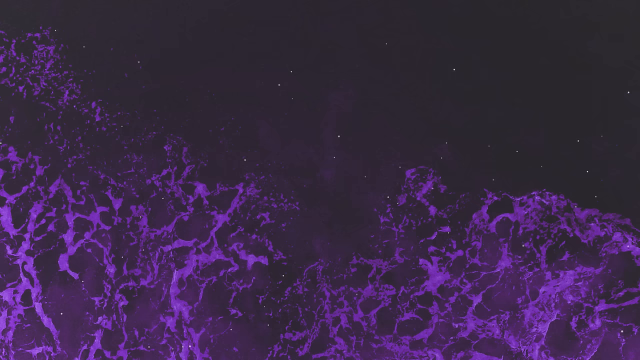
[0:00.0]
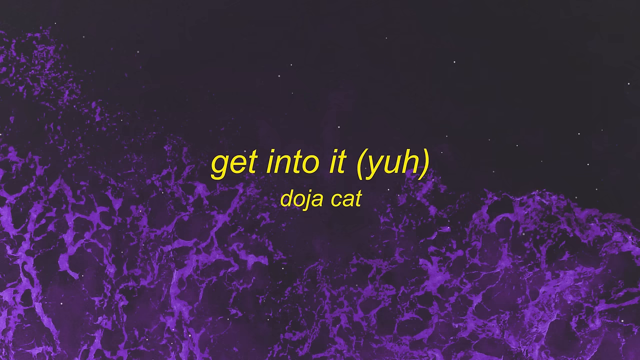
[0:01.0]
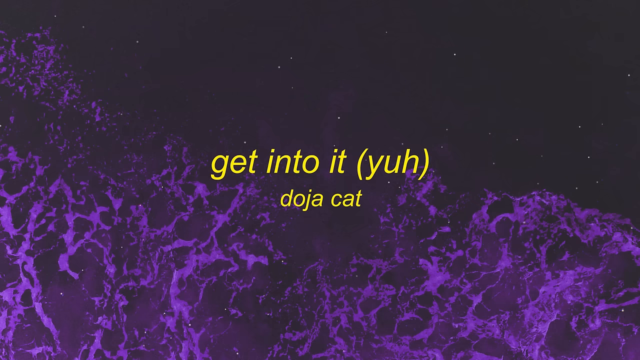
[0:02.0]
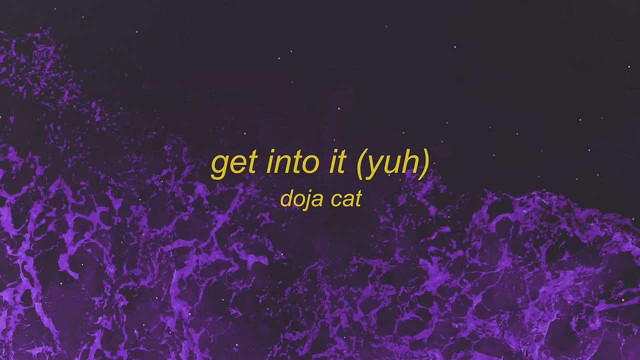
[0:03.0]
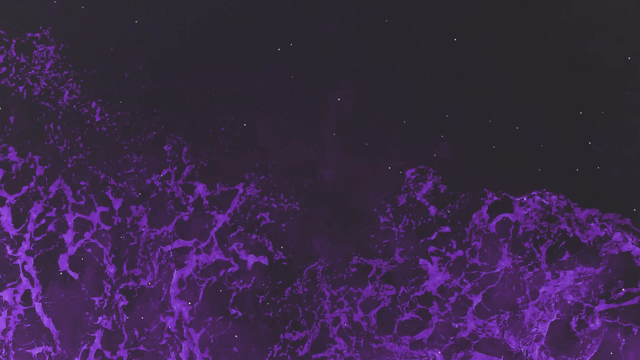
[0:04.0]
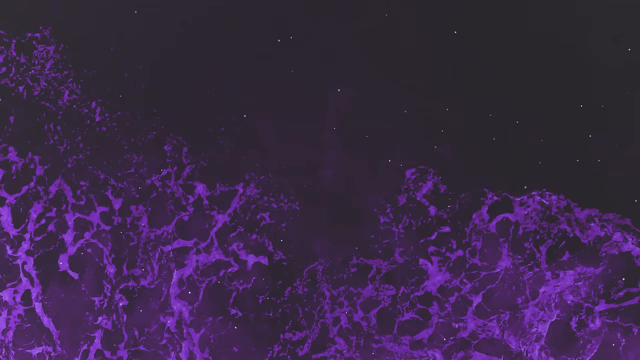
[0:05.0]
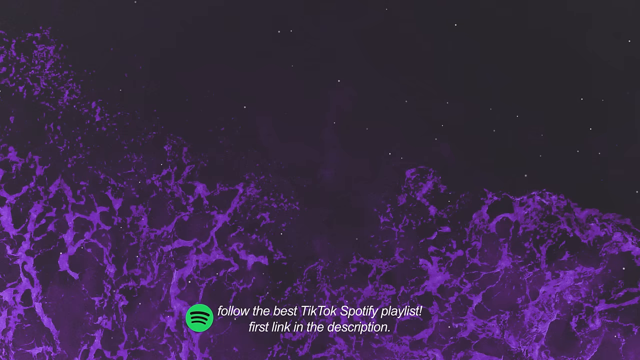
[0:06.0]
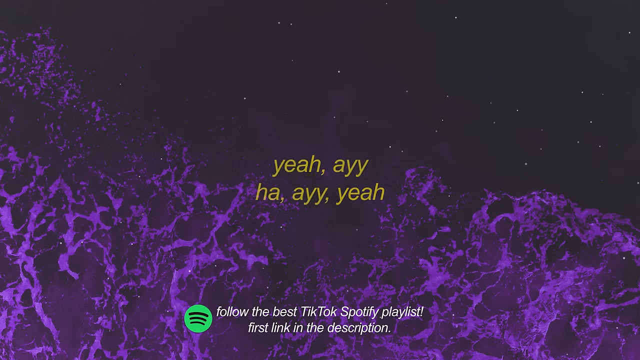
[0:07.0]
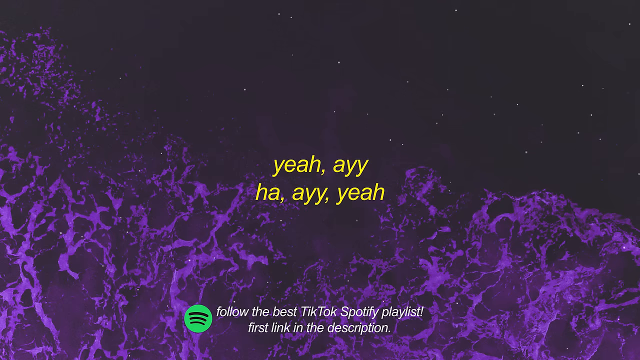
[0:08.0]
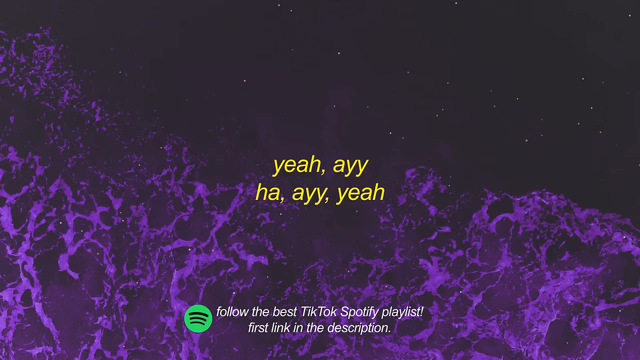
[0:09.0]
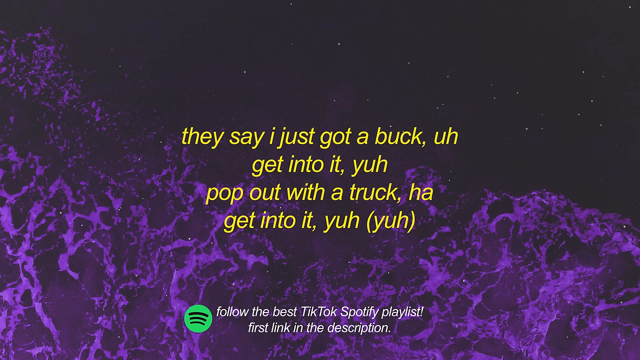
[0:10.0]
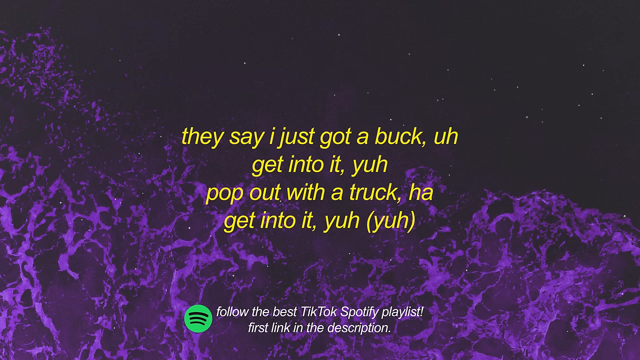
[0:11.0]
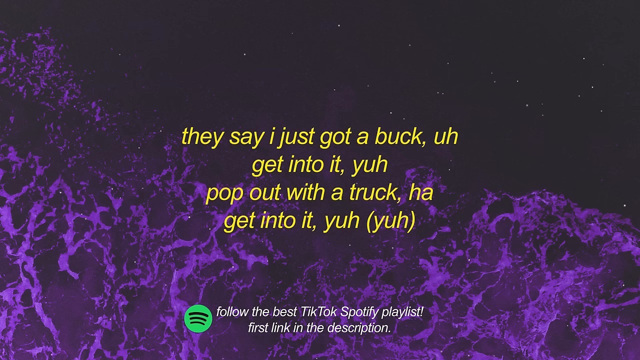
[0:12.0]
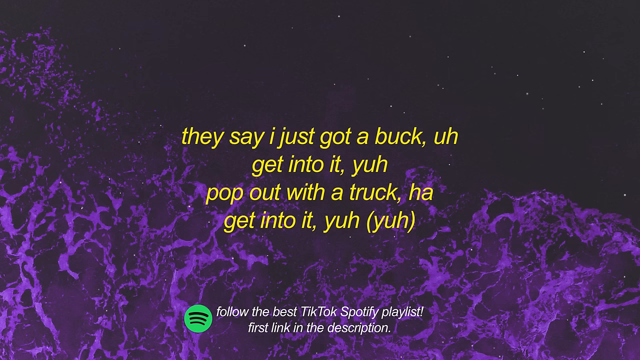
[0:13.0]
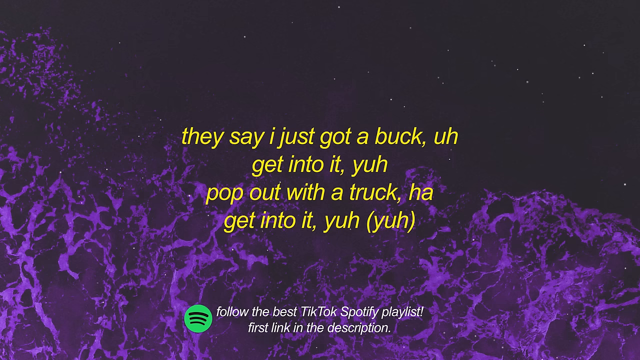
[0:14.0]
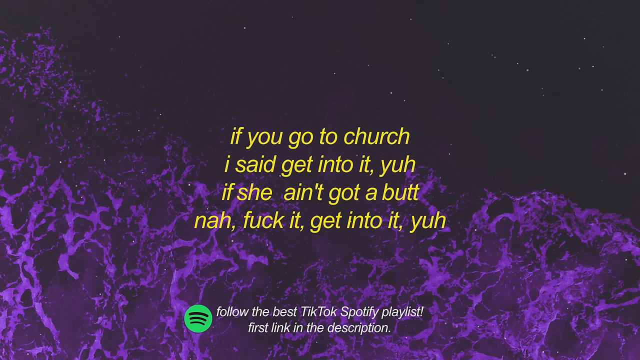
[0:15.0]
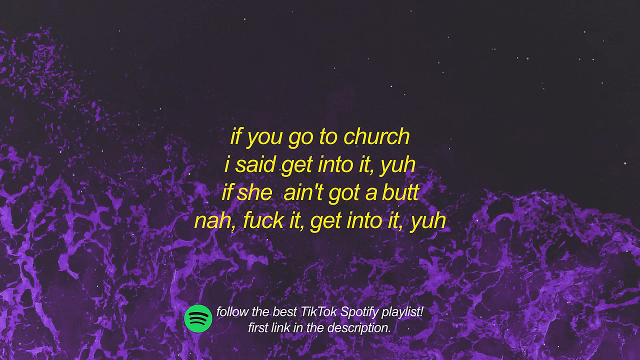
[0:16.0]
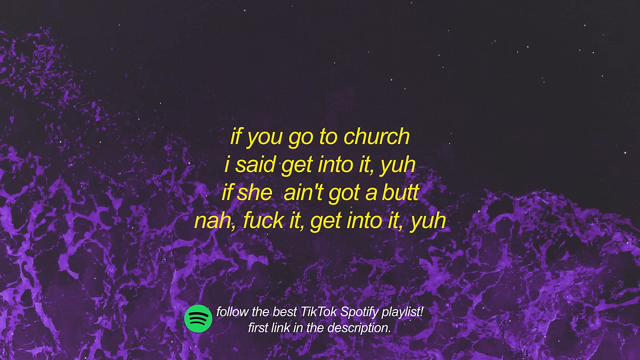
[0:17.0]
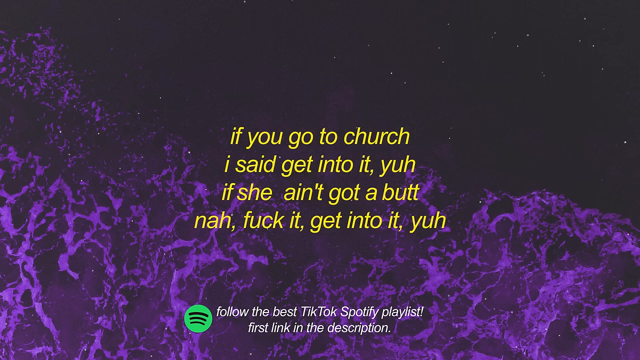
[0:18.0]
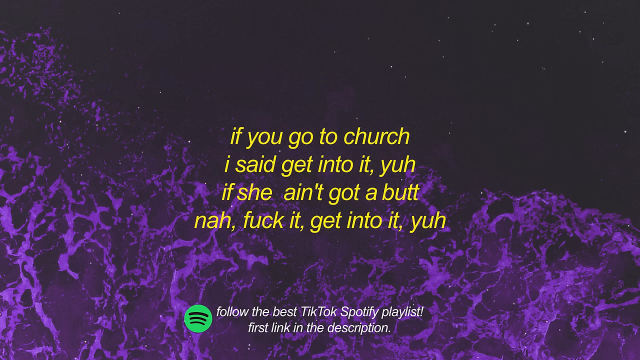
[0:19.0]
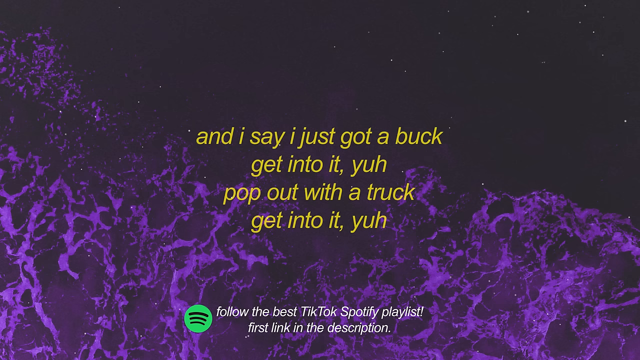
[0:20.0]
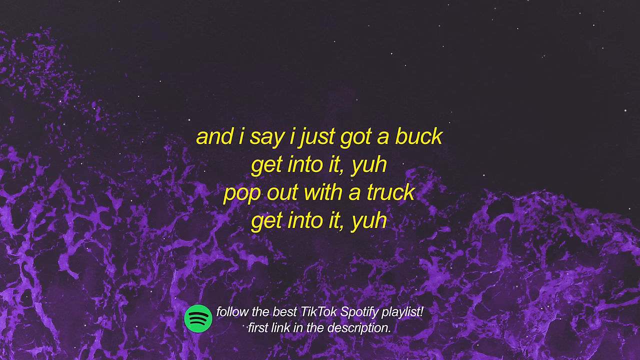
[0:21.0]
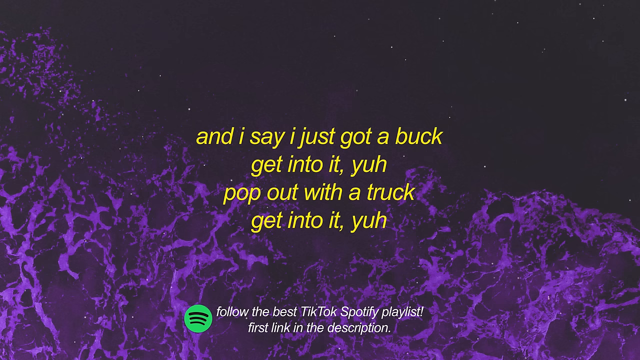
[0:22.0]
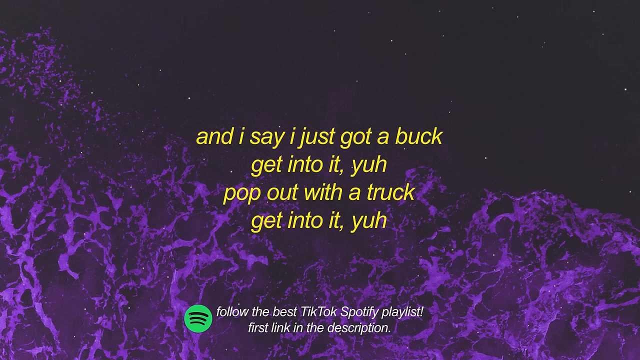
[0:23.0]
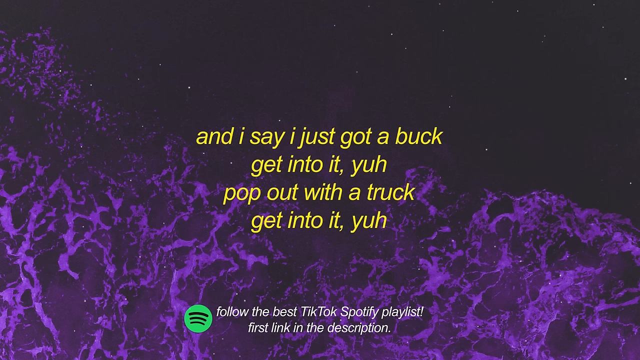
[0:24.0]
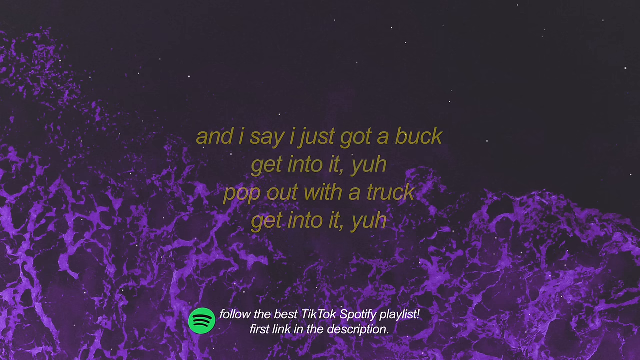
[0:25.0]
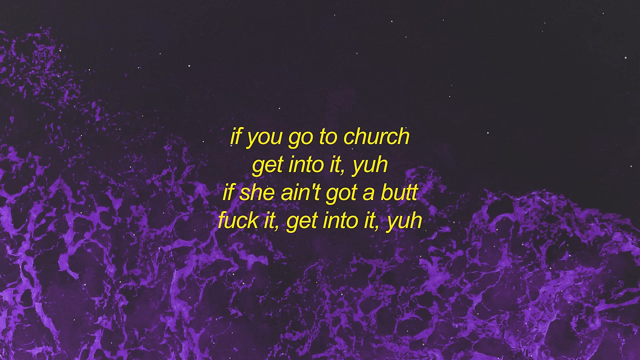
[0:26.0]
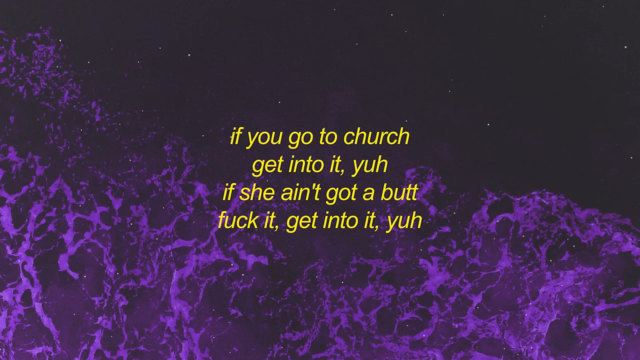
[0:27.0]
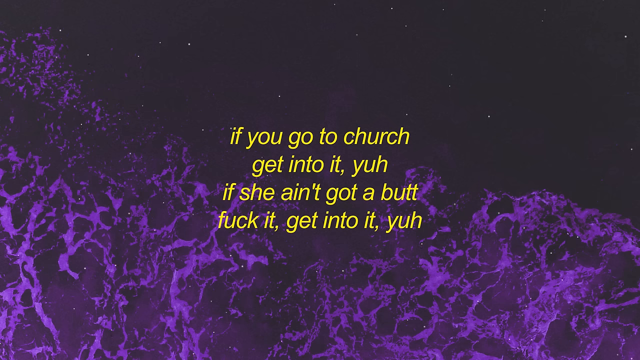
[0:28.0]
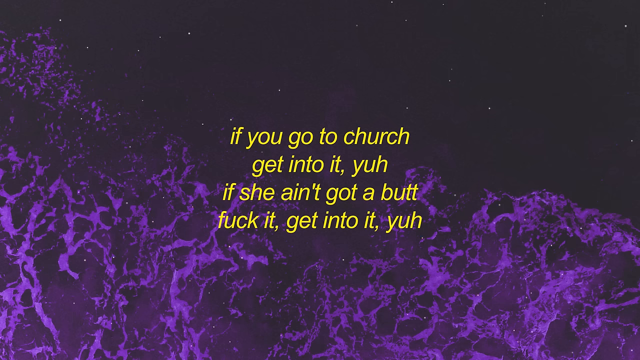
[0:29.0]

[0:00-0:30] Song lyrics appear in yellow font on a black background with waves, apparently of water, that look kind of purplish. The text reads "they say I got a buck. Get into it. Yeah. Pop out with a truck. Ha. Get into it. Yeah." followed by "if you go to church, I said get into it. Yeah. If she ain't got a butt nah. Fuck it. Get into it. Yeah." The lyrics continue with "and I say I just got a buck. Get into it. Yeah. Pop out with a truck. Get into it. Yeah." and then "if you go to church, get into it. Yeah. If she ain't got a butt fuck it. Get into it. Yeah." The words appear to be lyrics to a song.